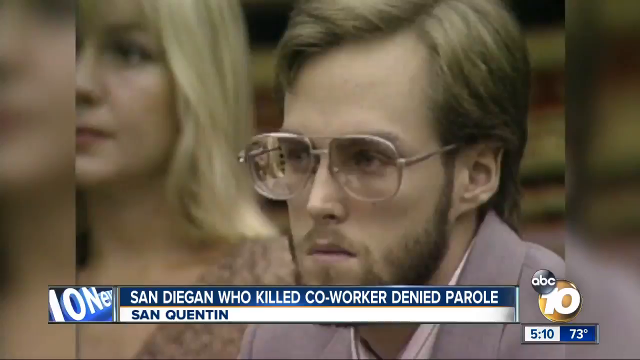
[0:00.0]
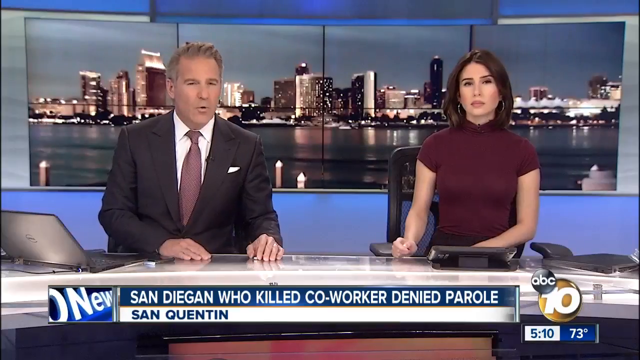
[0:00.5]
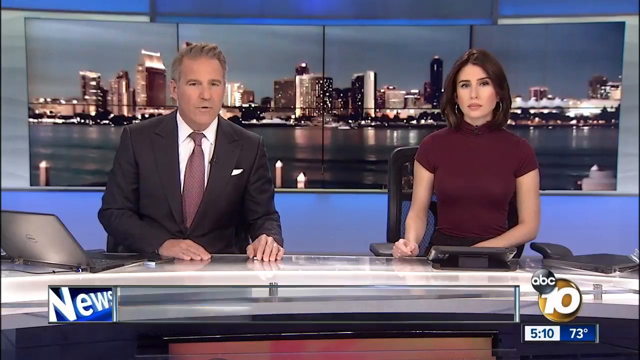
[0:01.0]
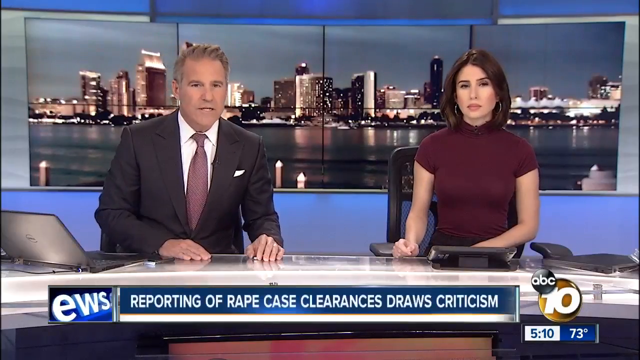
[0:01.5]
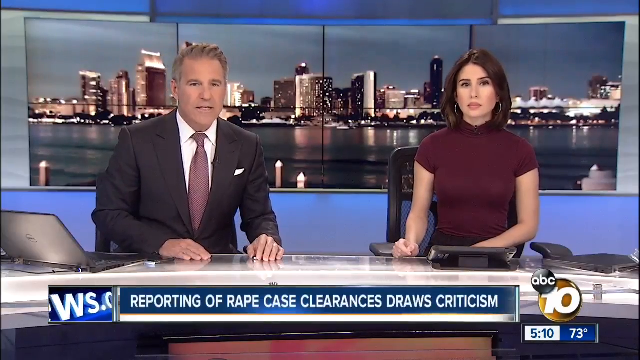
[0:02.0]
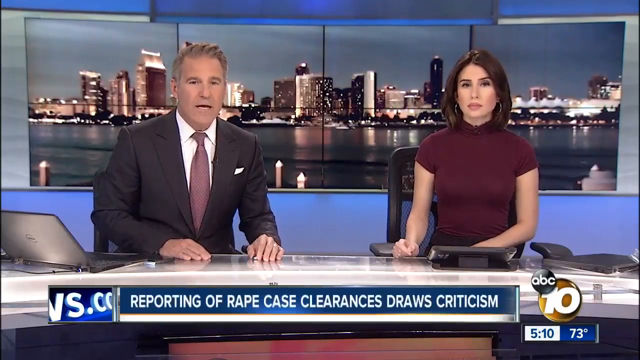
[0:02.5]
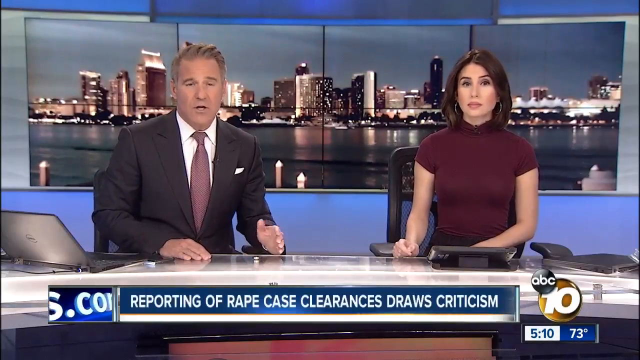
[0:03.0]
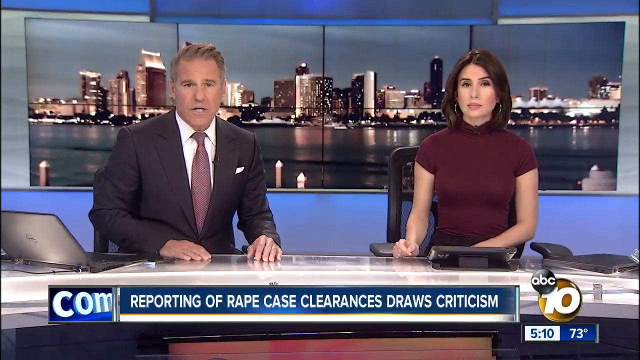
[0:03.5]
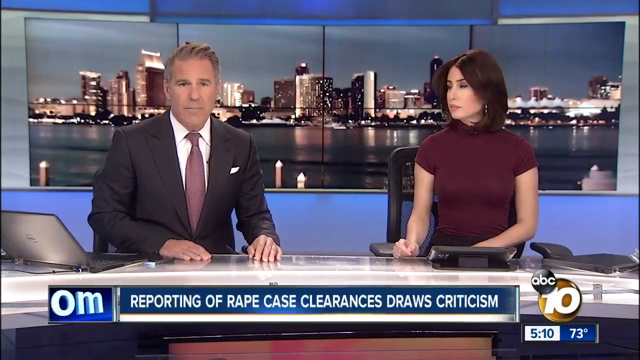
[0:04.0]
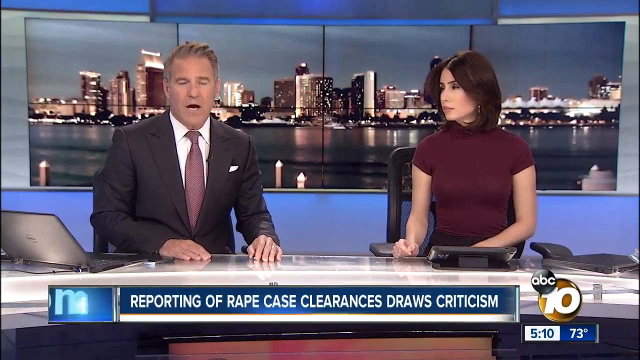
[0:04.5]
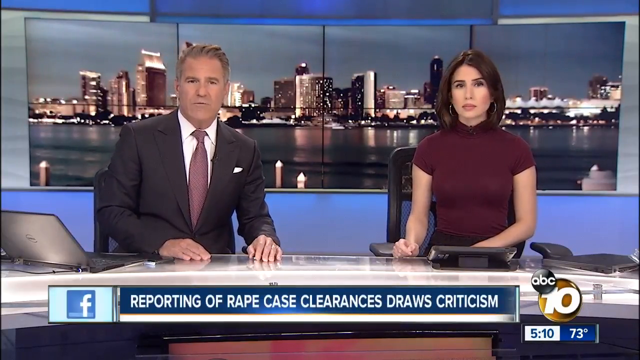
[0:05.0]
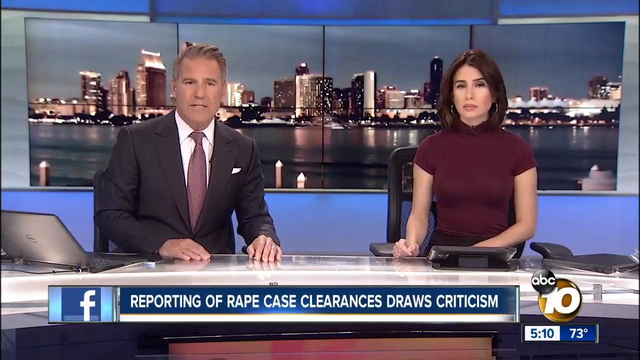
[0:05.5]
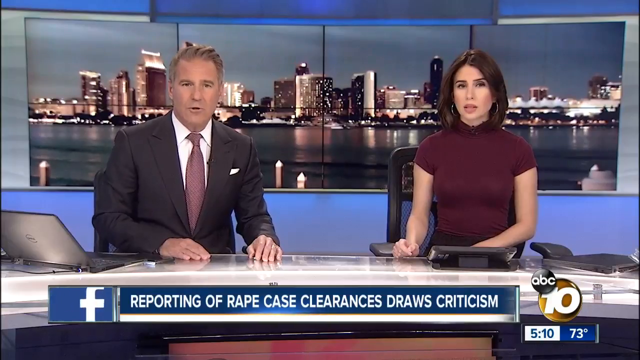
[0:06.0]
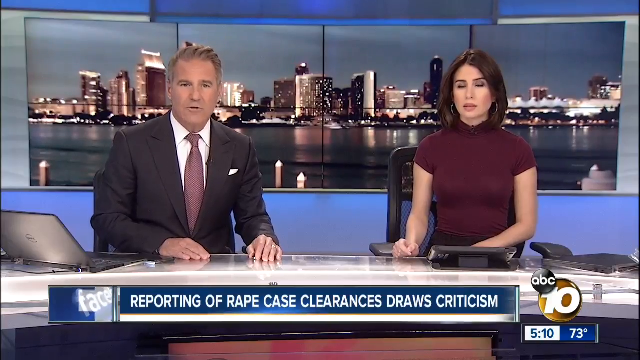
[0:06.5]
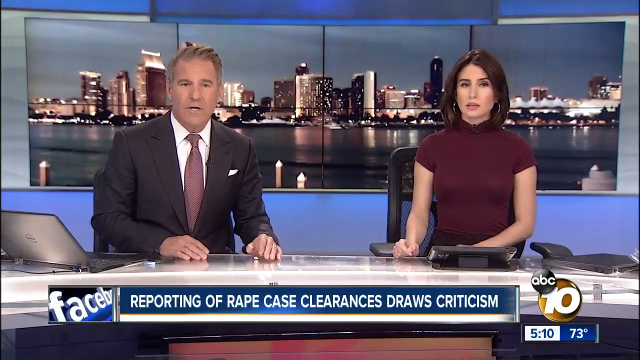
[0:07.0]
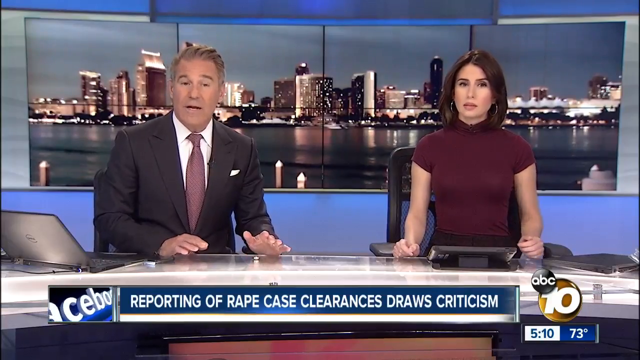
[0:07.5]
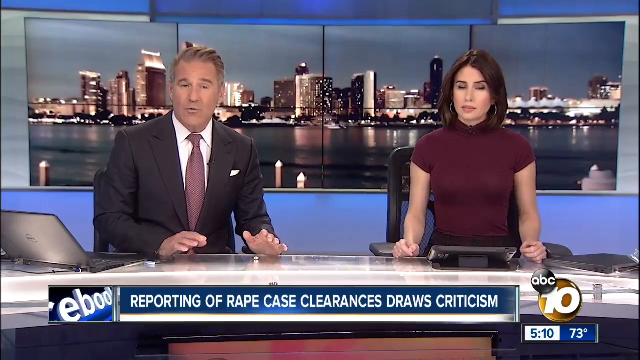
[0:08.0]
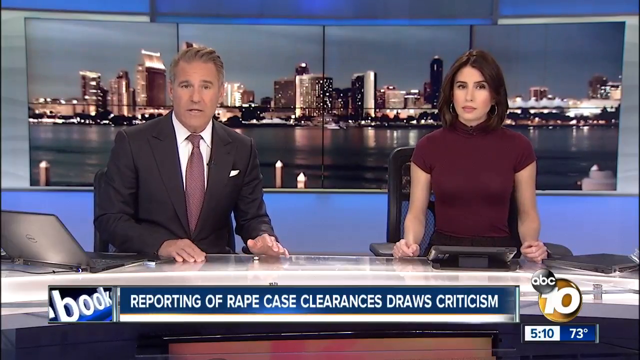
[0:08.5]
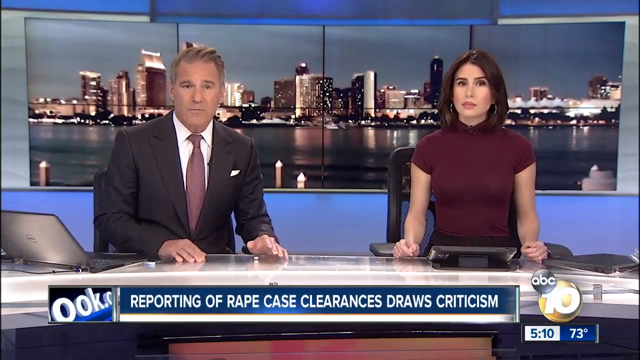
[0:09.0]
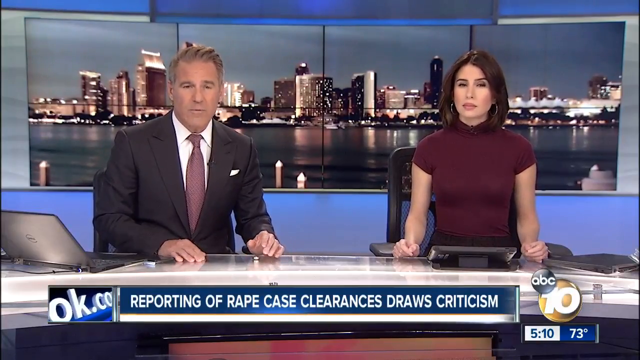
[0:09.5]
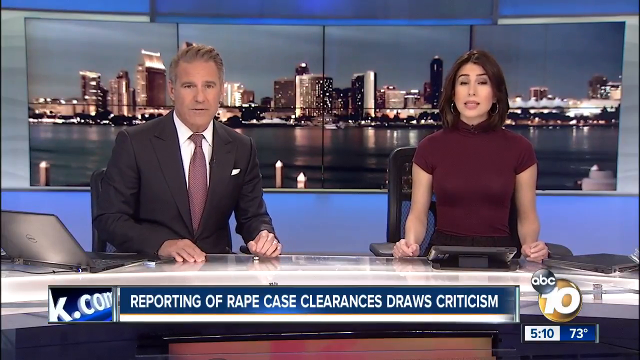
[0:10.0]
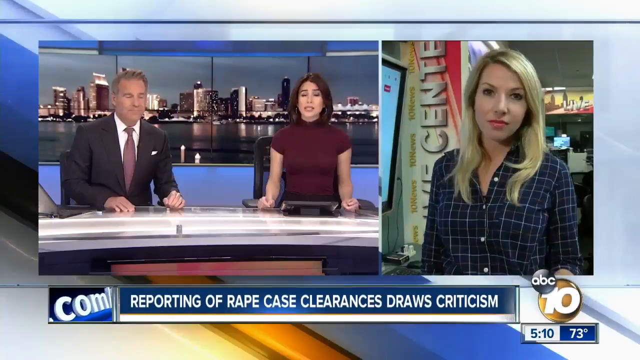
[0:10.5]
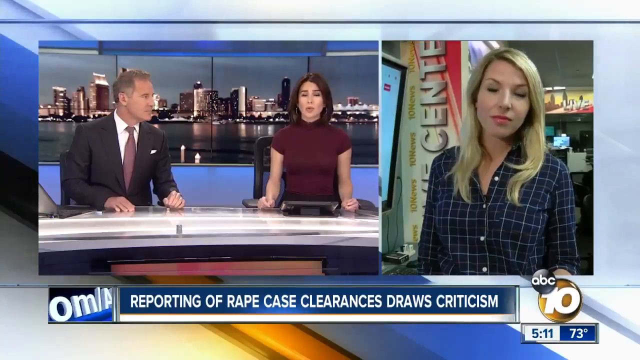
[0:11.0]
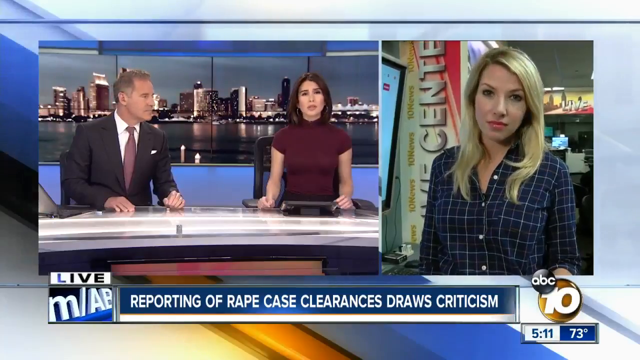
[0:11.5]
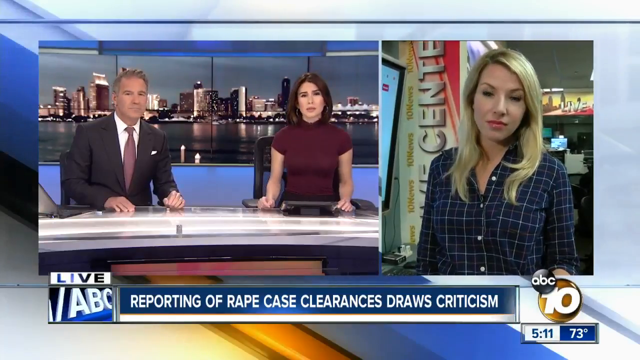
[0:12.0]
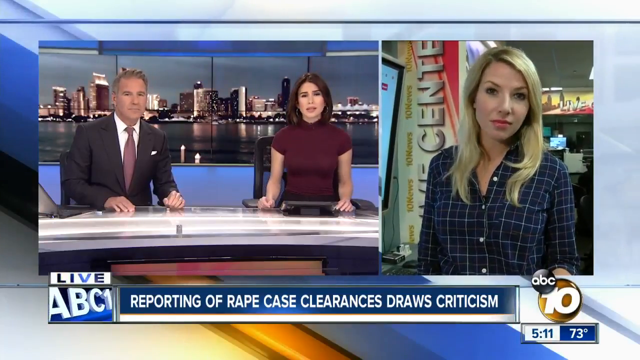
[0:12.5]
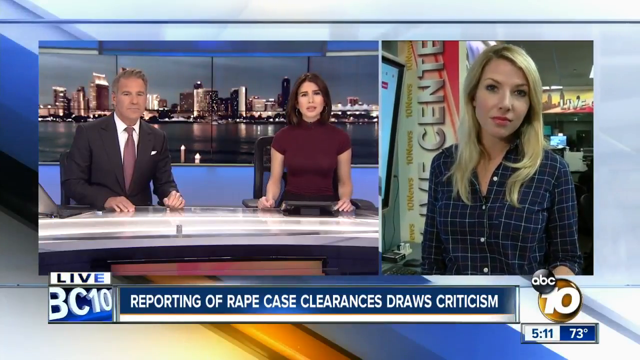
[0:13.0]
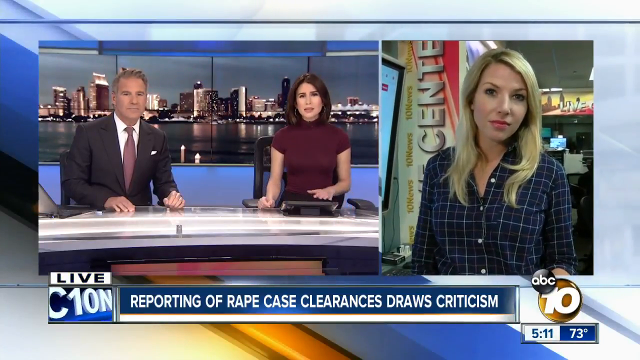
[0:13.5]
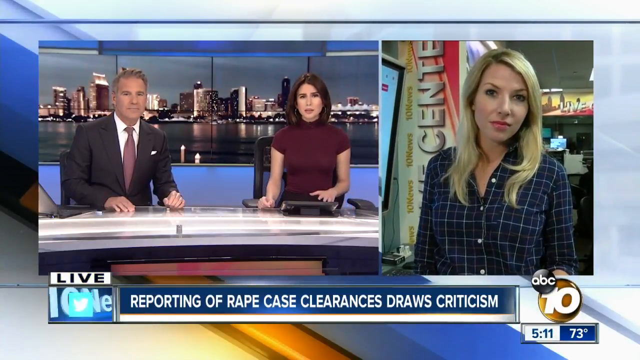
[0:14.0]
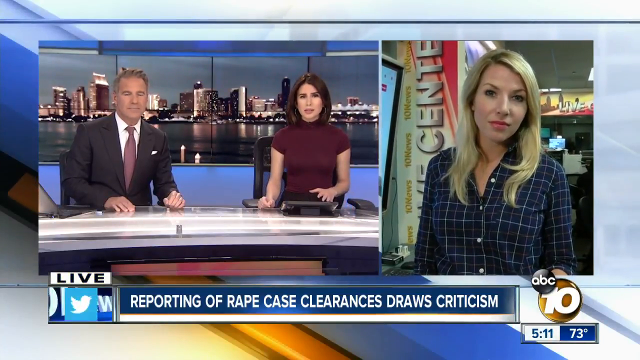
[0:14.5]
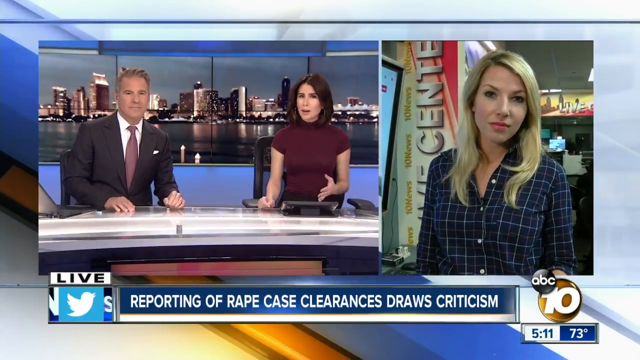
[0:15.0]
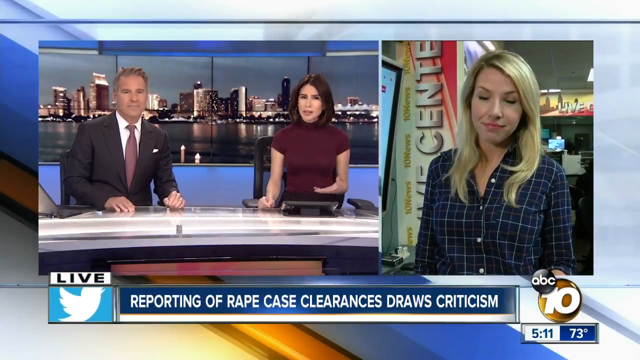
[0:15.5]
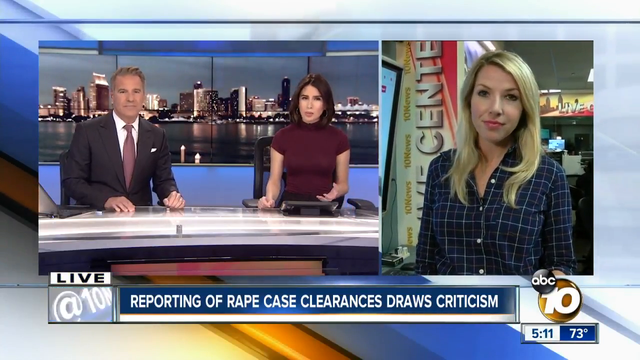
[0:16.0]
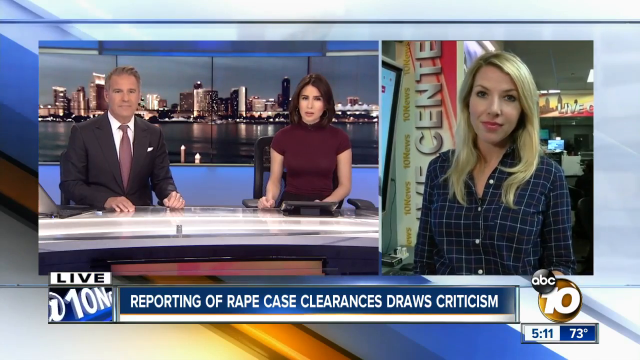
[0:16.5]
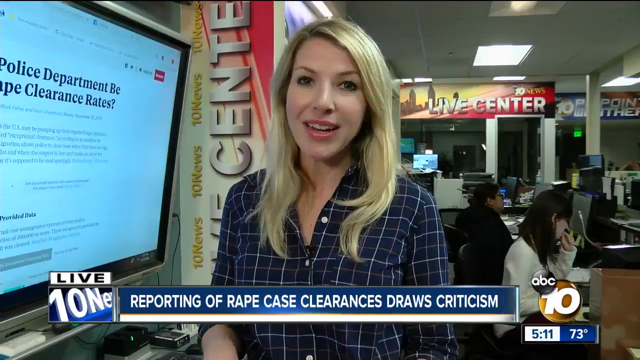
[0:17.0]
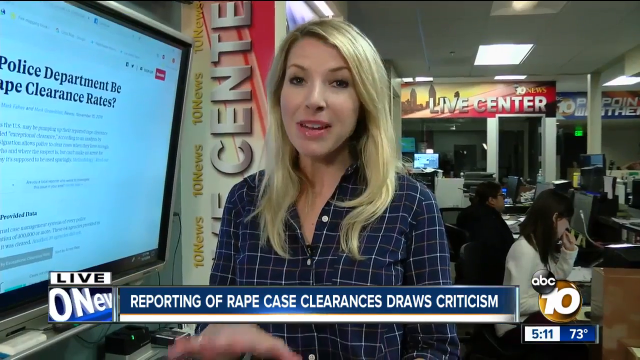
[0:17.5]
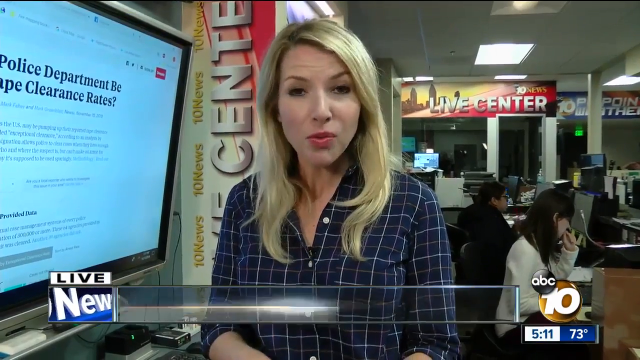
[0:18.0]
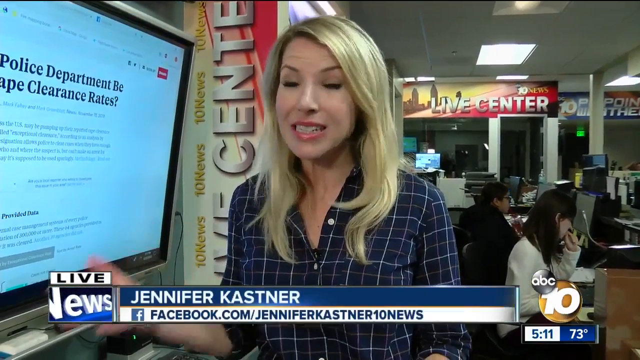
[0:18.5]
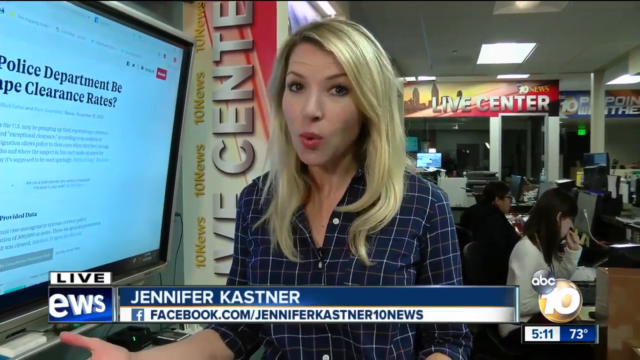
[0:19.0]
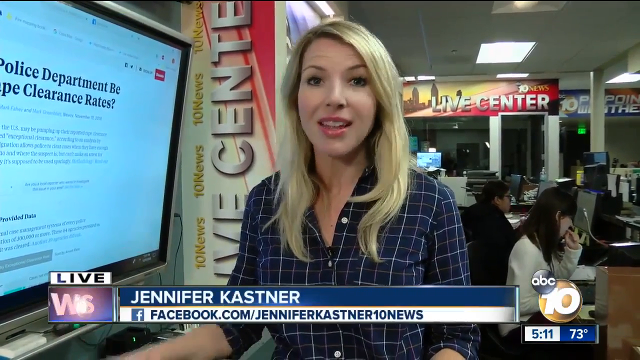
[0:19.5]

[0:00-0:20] A news broadcast on ABC10 shows two news anchors; one of them reports on an article about a rape case in Brooklyn. A reporter, Jennifer, is reporting live on the ground. Text refers to "many law enforcement agencies across the U.S." and an analysis.